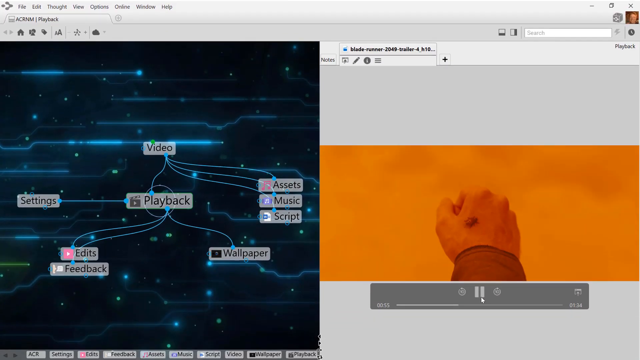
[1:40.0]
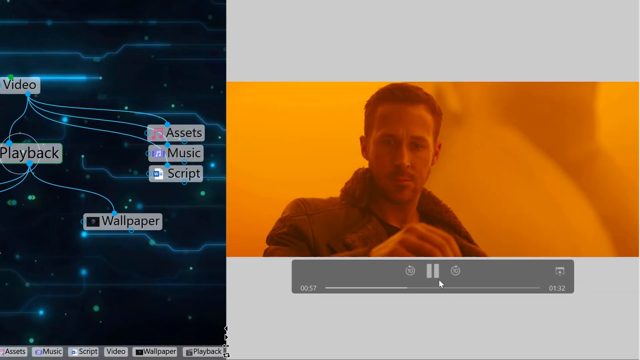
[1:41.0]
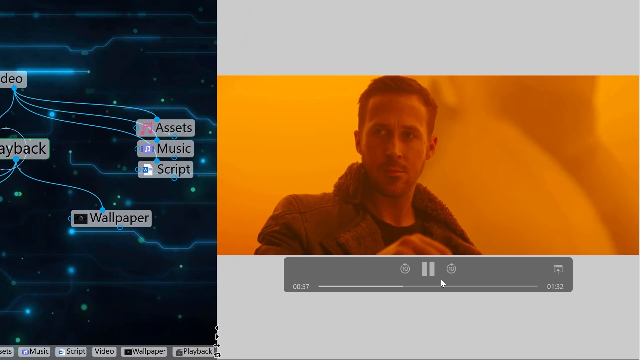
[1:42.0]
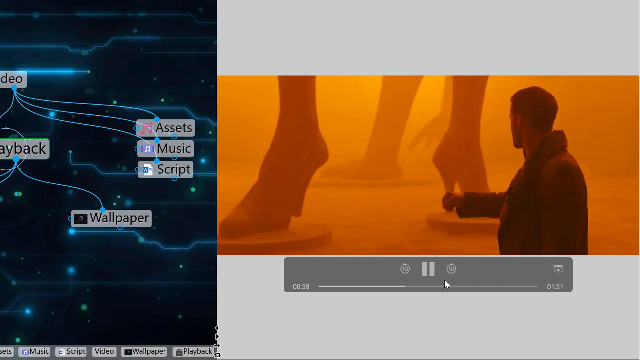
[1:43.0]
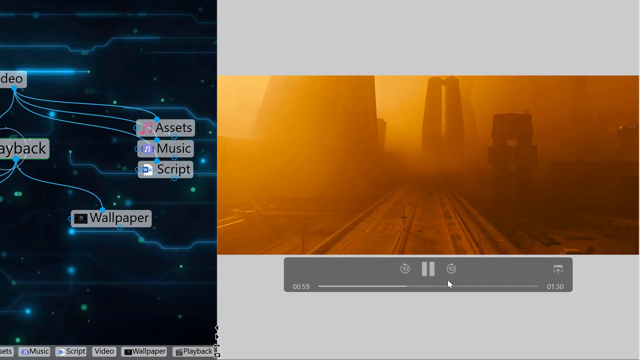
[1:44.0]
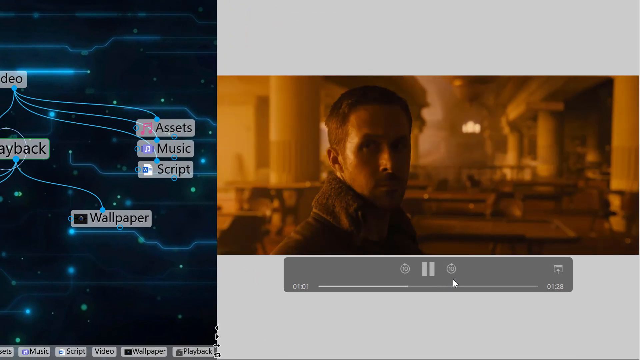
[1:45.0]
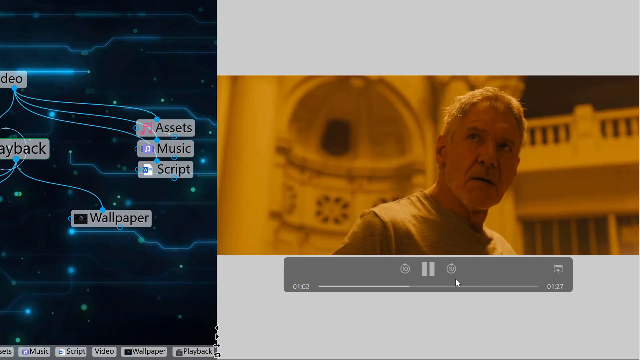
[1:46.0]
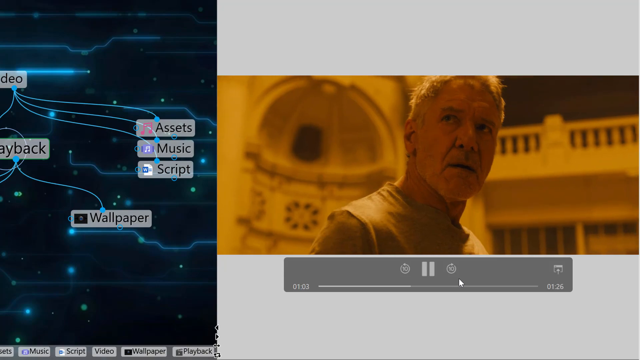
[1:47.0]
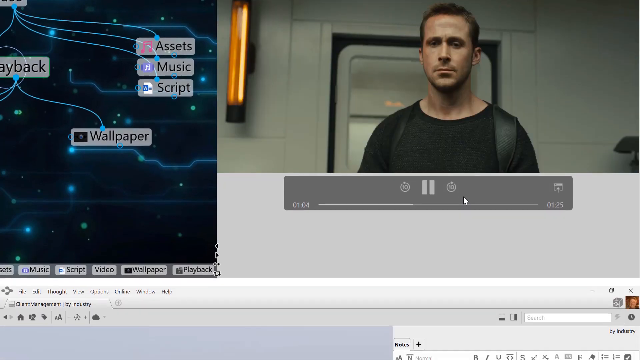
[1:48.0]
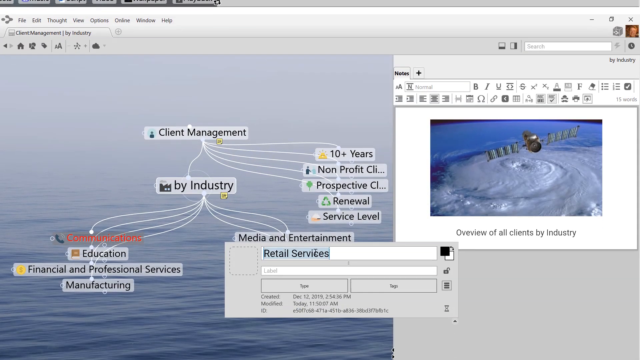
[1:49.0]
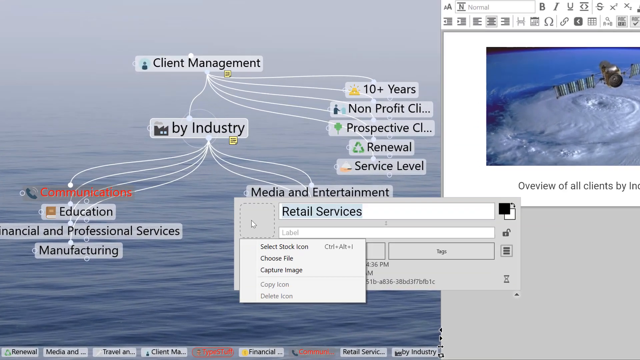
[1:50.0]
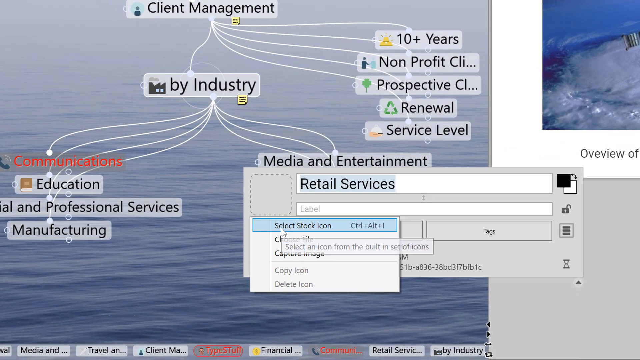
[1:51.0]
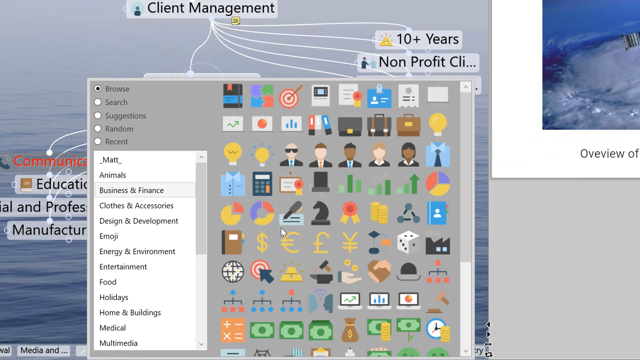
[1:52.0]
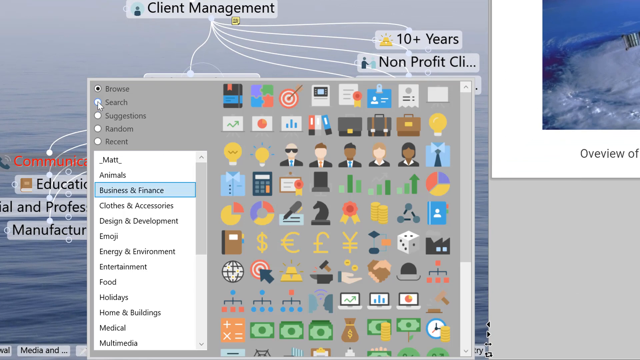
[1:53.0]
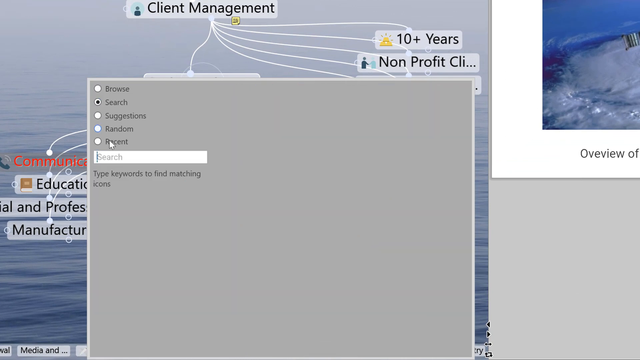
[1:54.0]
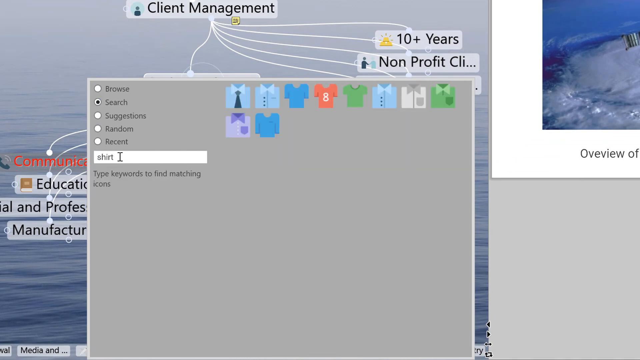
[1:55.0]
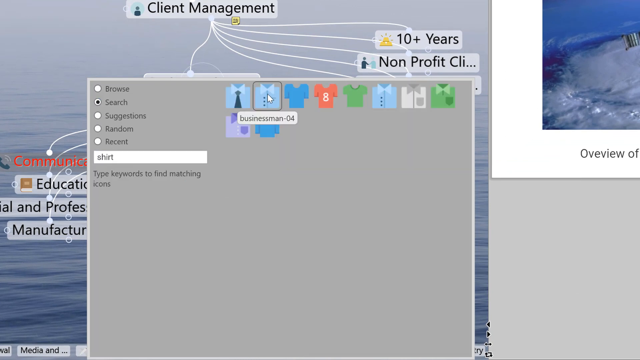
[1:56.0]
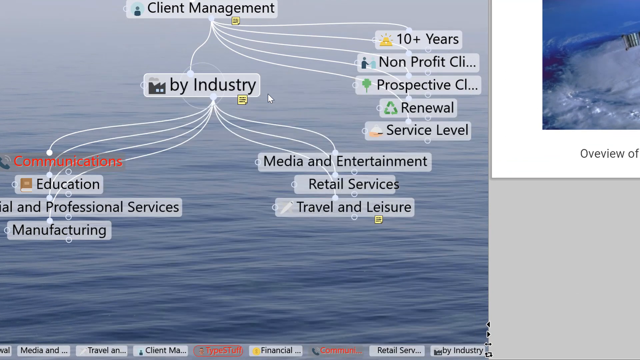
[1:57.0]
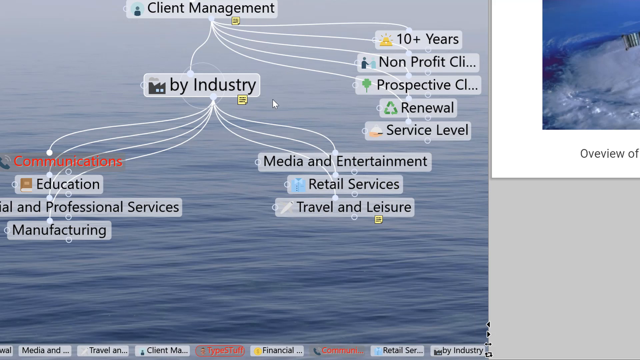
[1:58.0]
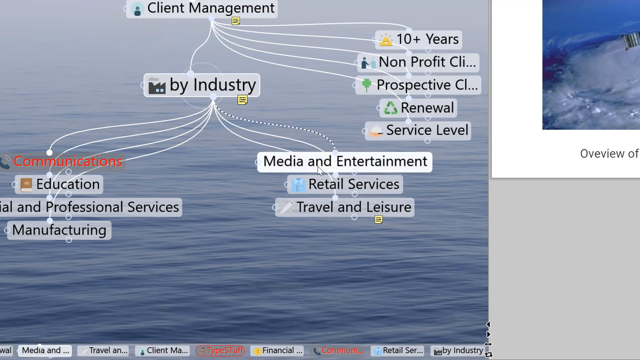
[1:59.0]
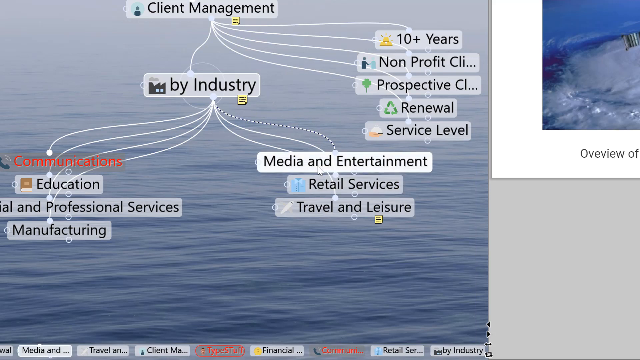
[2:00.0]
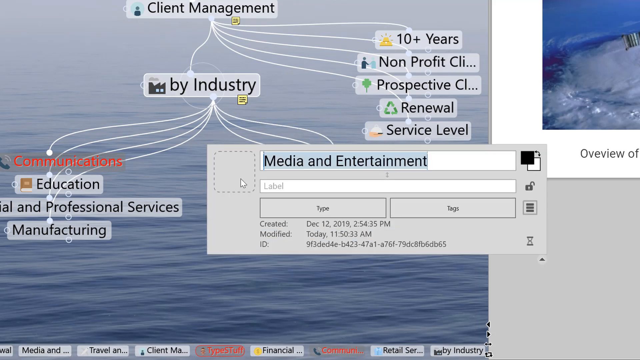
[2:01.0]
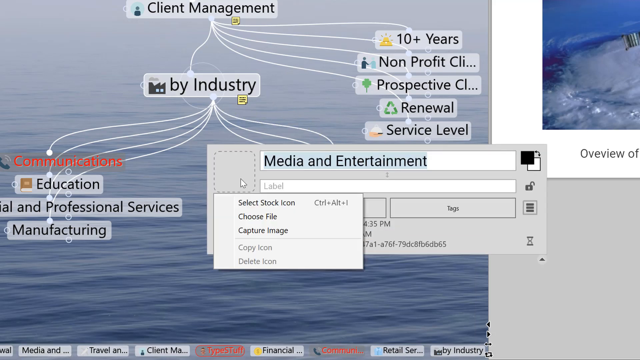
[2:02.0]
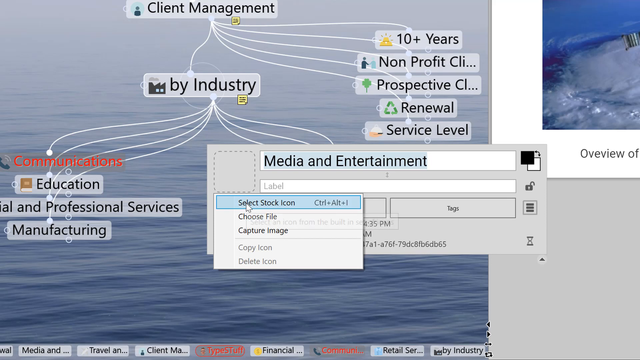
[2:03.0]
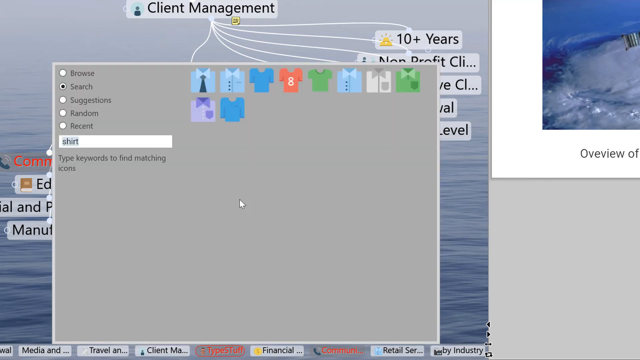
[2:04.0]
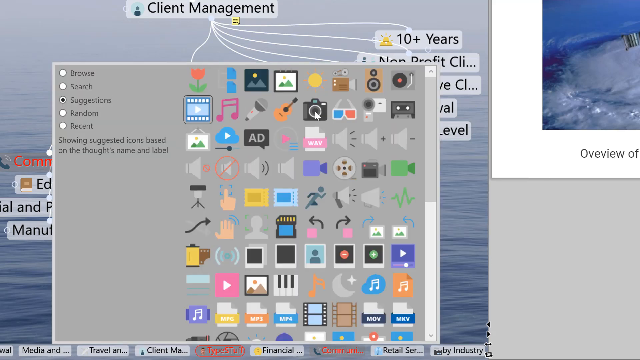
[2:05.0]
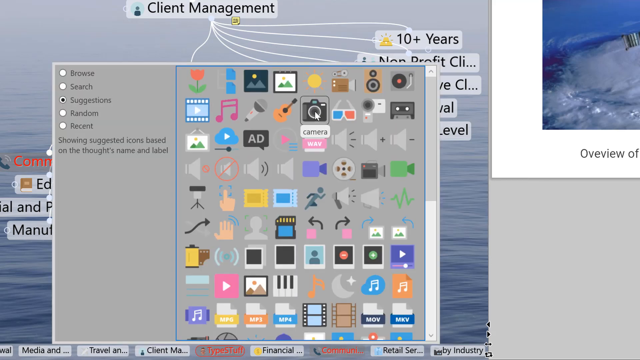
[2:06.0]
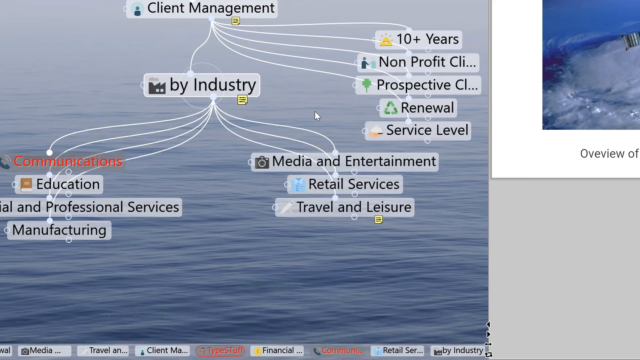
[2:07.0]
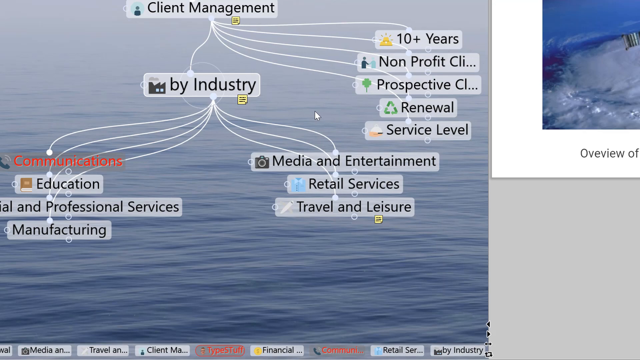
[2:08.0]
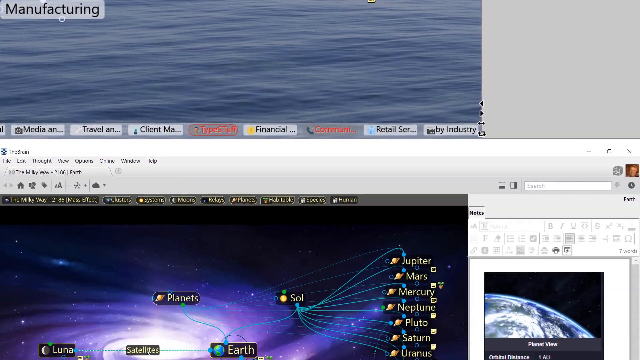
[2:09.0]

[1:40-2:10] The fist is a right hand, with the right thumb over the other fingers, clenching. On the top right, where the base of the thumb meets the index finger, there is either some kind of bug or some kind of mole. Underneath it is a play button for a long gray bar that is currently playing, with the cursor over it. The view zooms in, and a man who looks like Ryan Gosling appears, apparently from Blade Runner. He is looking down and wearing some kind of popped trench coat. The view zooms in a little and then zooms out to show what looks like a mass of legs. It then shows a city, briefly a railroad track, and a side shot of him standing in what looks like an empty coliseum, with pillars and a light in the background. He turns towards the camera, and Harrison Ford, the original Blade Runner, appears; they look at each other. The video then scrolls back down into a split screen: on the right is a satellite dish overlooking the globe, and on the left is "client management" with white lines leading to different boxes. The view zooms in on "media and entertainment", which is currently typed as "retail services". The cursor is on "select stock icon"; it is clicked, opening a browse view with a bunch of emojis. The user clicks search and types "shirt", bringing up about 10 to 12 shirt emojis, and clicks "businessman 04", which adds that image to "retail services". They do the same for a few other items, adding an emoji to each, and the view scrolls down to another area showing a constellation-like picture with various boxes and arrows.